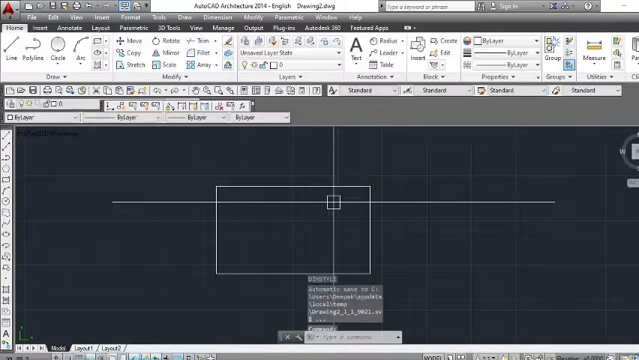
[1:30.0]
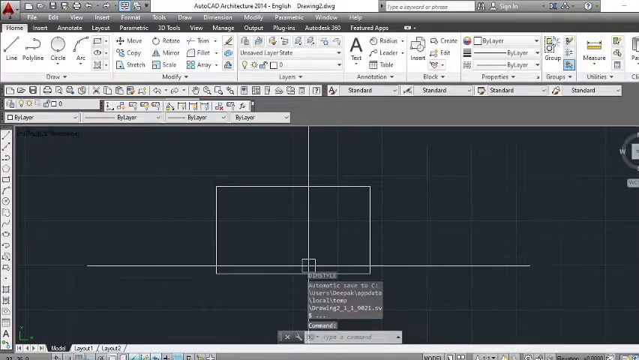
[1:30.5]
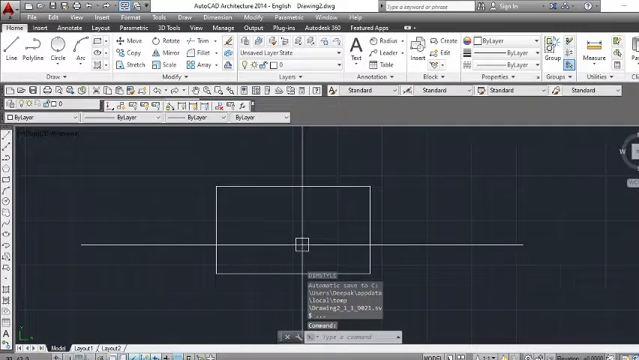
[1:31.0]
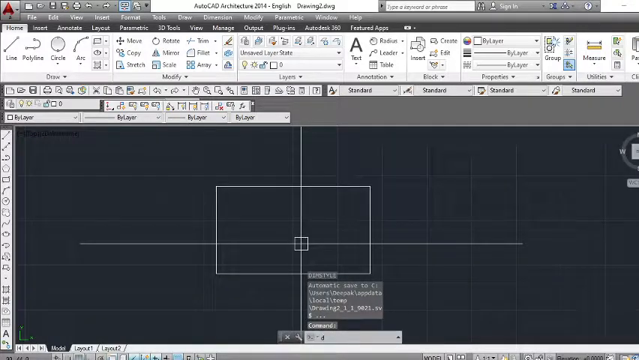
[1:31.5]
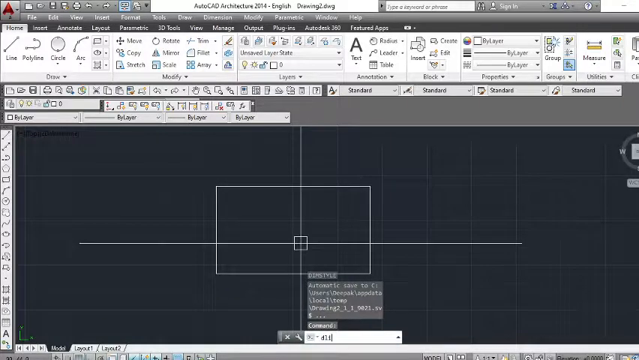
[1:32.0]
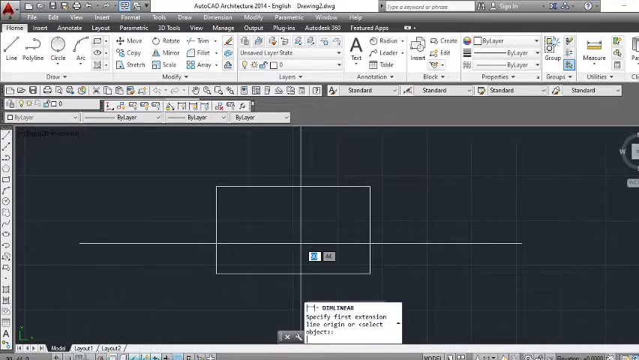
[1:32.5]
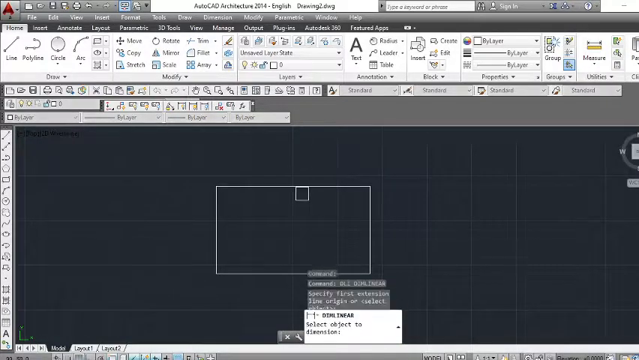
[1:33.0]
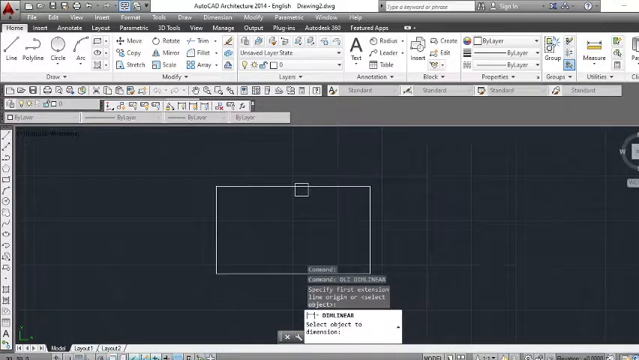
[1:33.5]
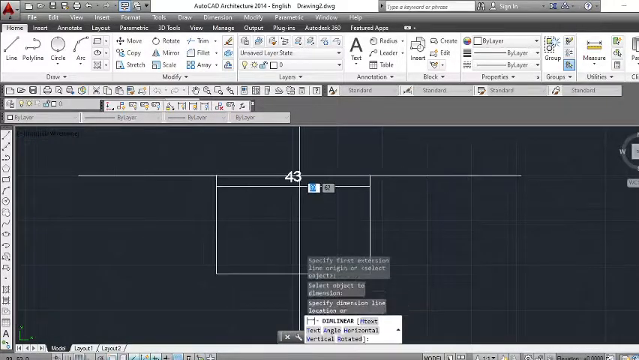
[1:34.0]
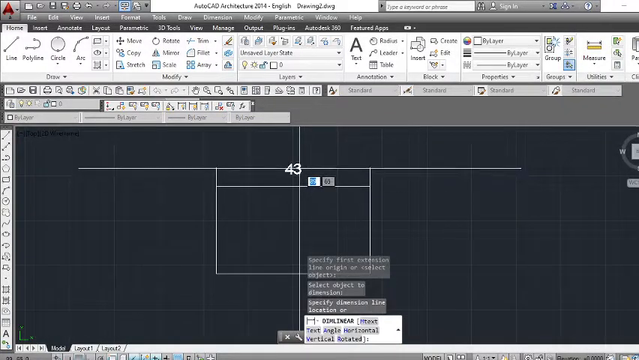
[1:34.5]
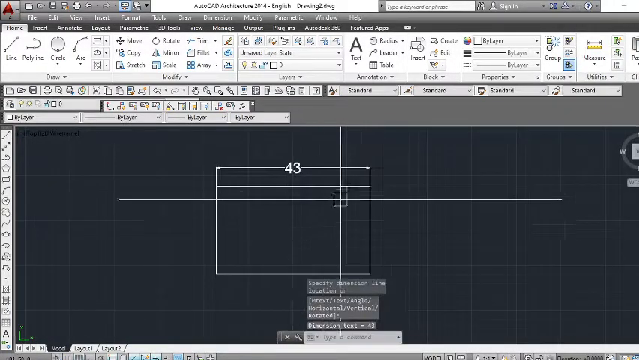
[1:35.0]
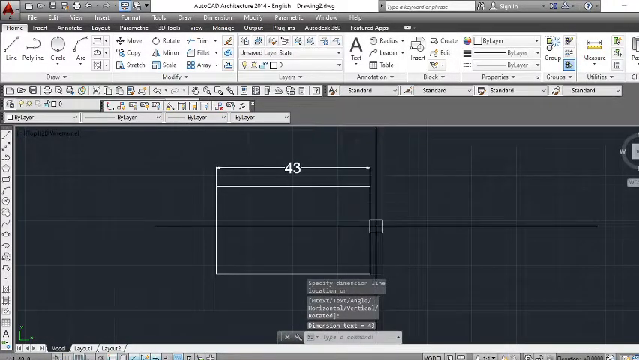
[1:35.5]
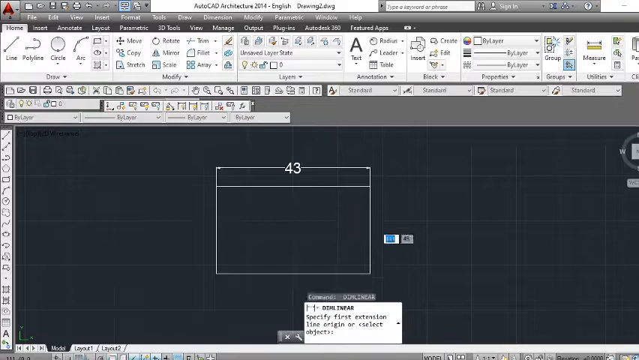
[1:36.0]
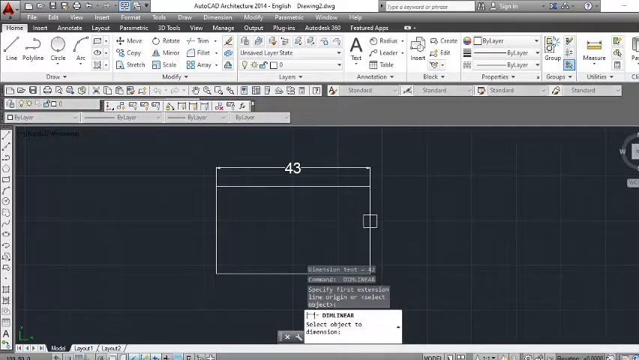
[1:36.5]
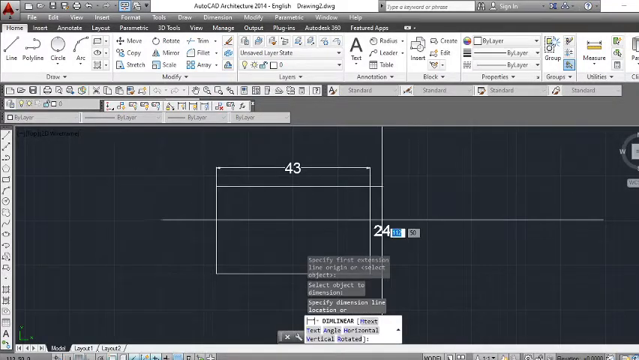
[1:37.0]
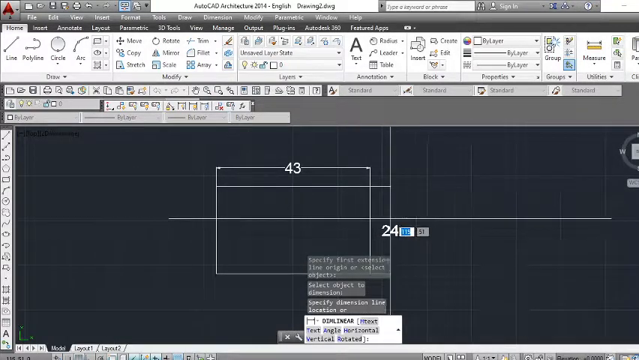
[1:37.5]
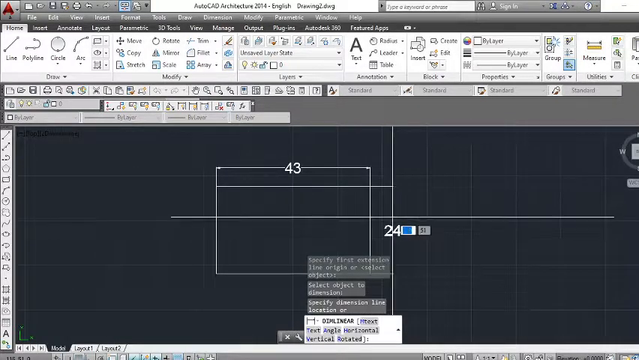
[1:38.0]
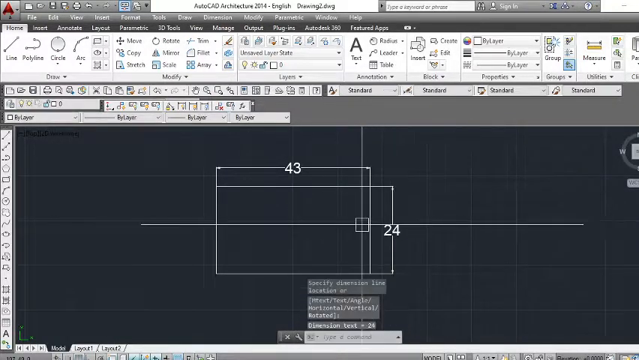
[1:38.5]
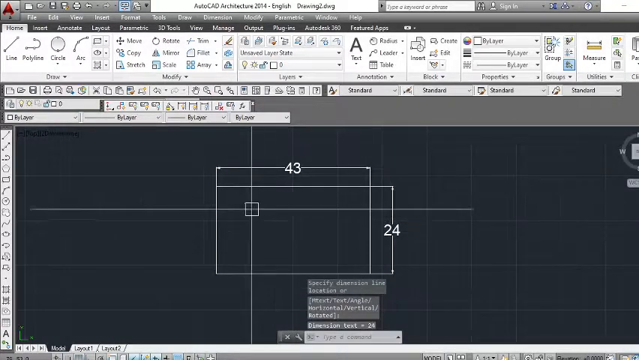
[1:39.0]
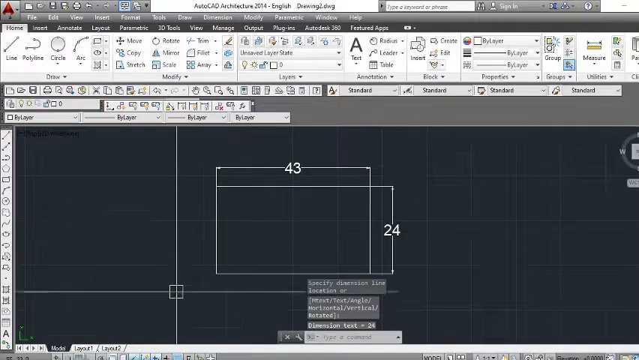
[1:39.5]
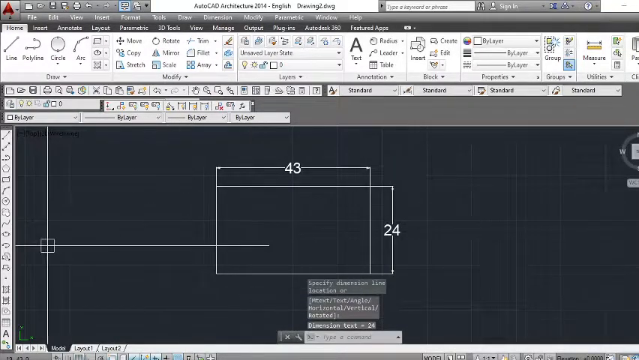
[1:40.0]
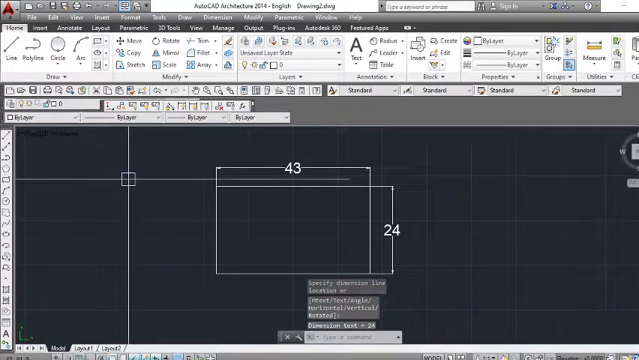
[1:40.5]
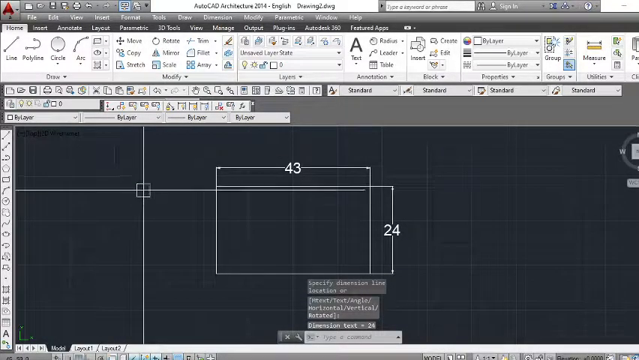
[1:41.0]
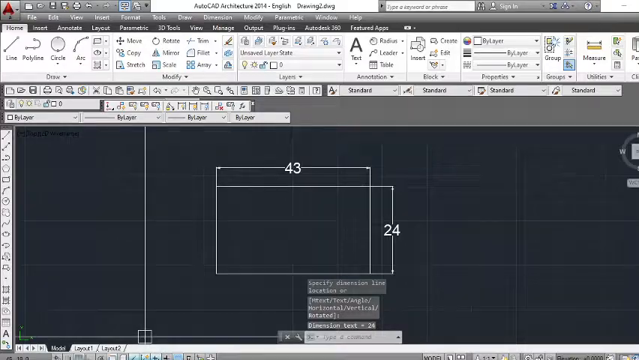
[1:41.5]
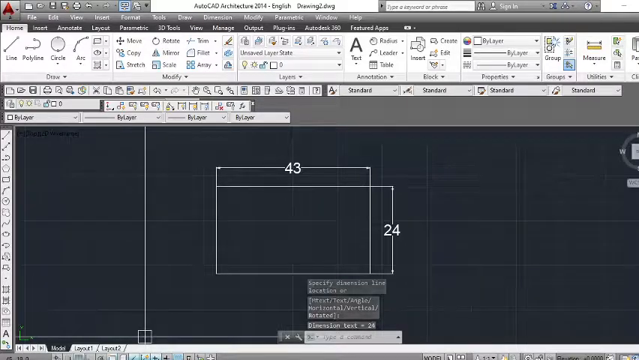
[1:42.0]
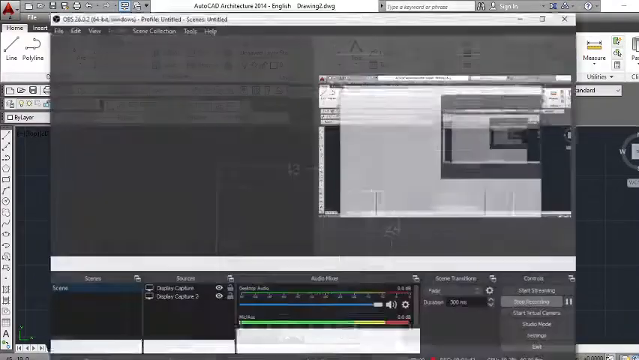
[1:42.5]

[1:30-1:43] A green screen with some light green tabs appears, and then the view changes to a screen where someone is designing something on a desktop or laptop. There is a black area, and the mouse cursor becomes a cross wherever it goes, apparently to zoom in. The cursor moves up and selects something, and 3.7 comes up. It moves to the right, the cross goes up and down, and a drop-down menu opens showing some sort of design.